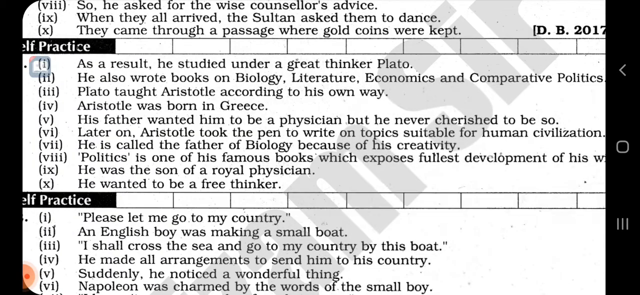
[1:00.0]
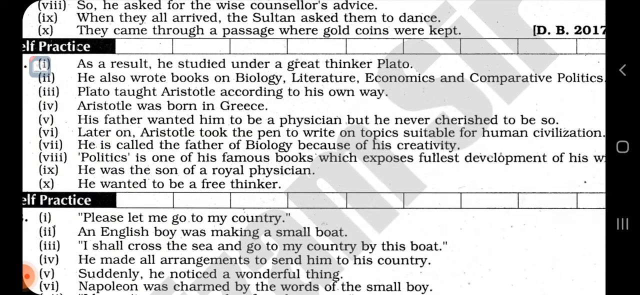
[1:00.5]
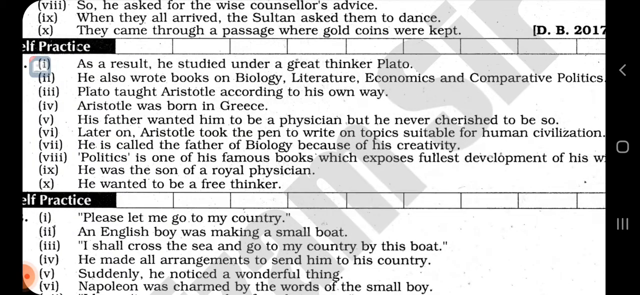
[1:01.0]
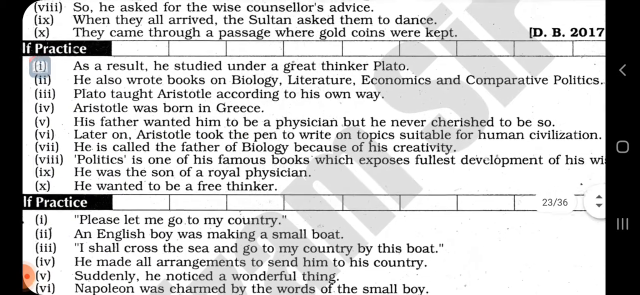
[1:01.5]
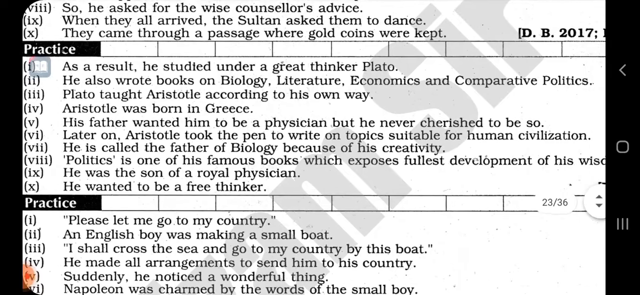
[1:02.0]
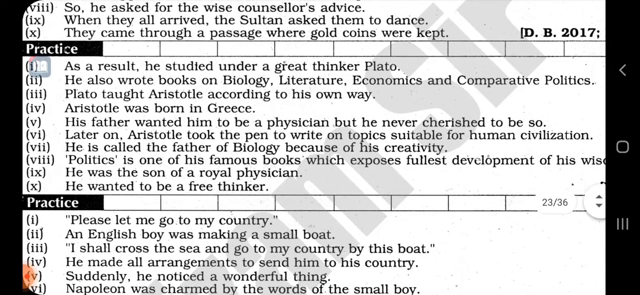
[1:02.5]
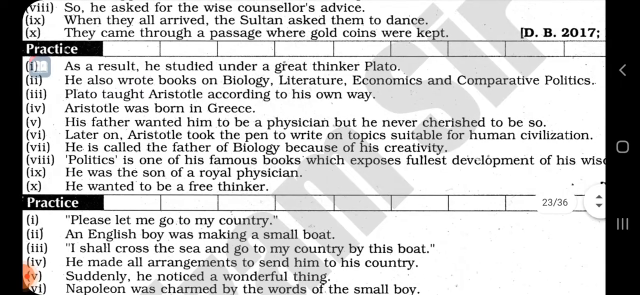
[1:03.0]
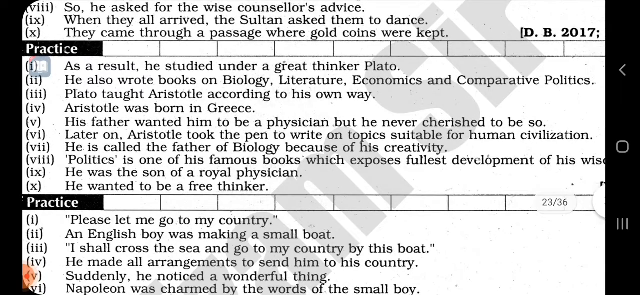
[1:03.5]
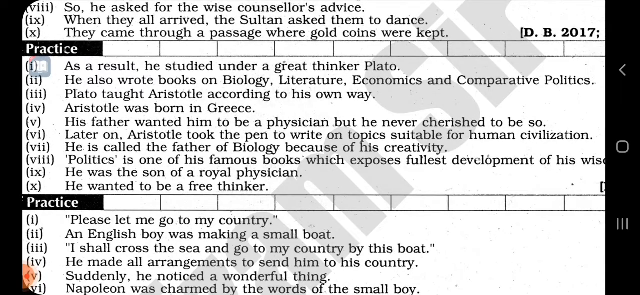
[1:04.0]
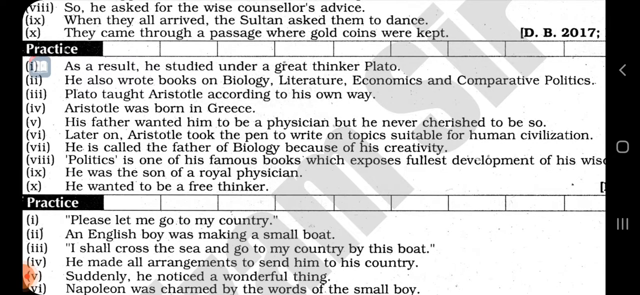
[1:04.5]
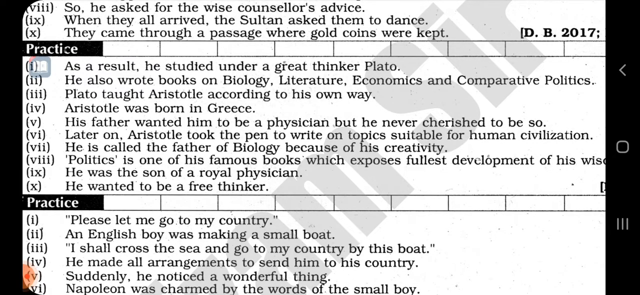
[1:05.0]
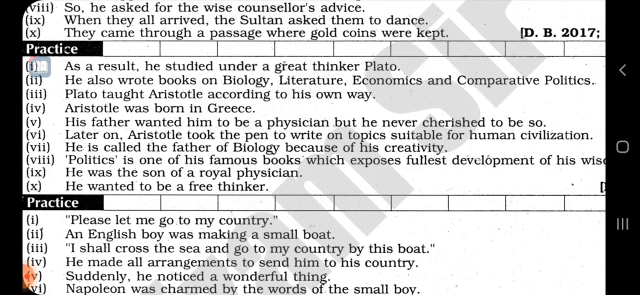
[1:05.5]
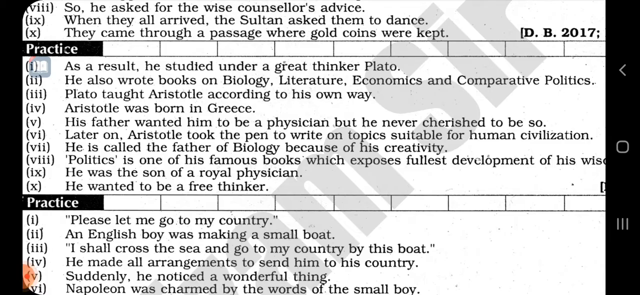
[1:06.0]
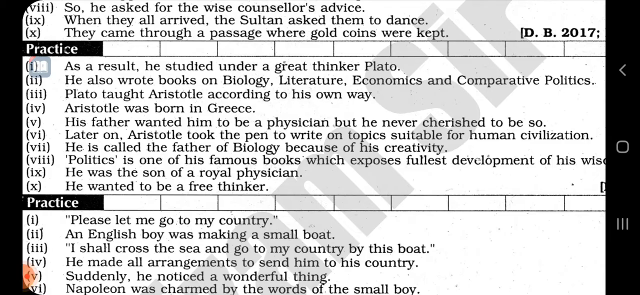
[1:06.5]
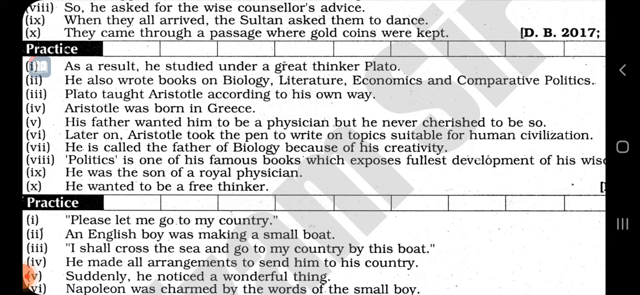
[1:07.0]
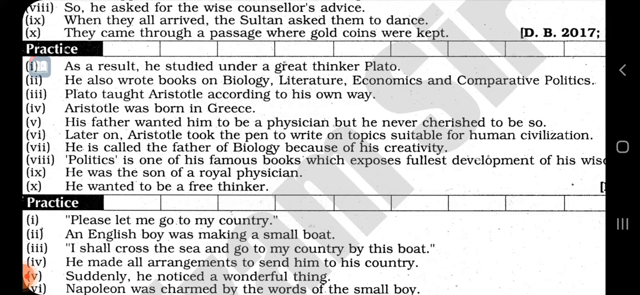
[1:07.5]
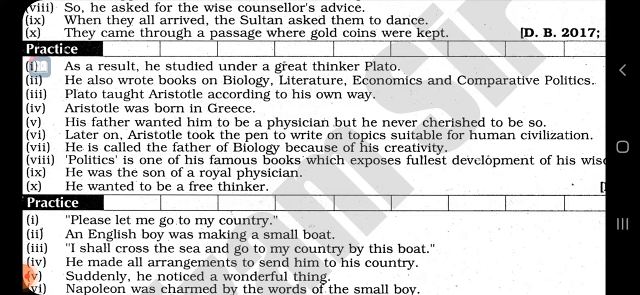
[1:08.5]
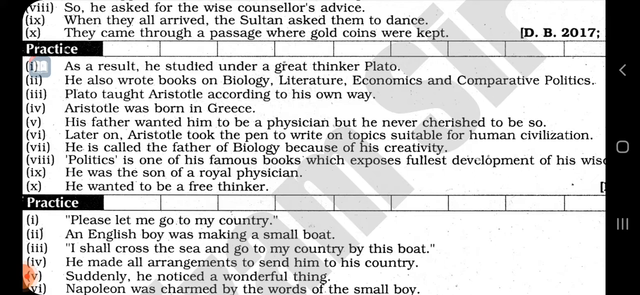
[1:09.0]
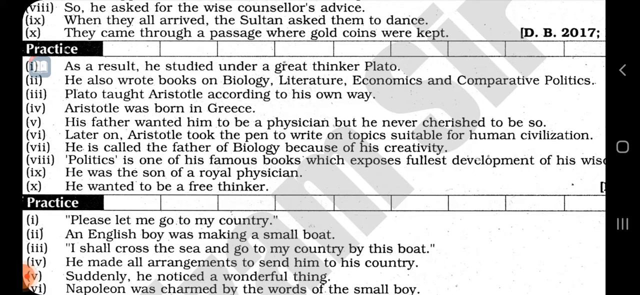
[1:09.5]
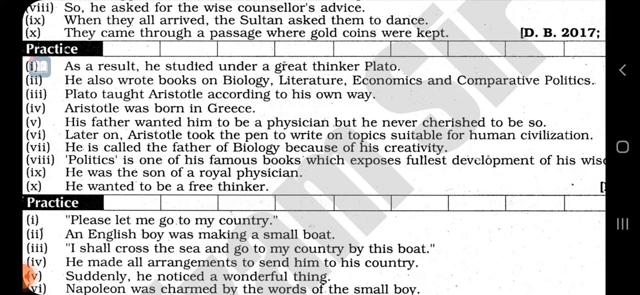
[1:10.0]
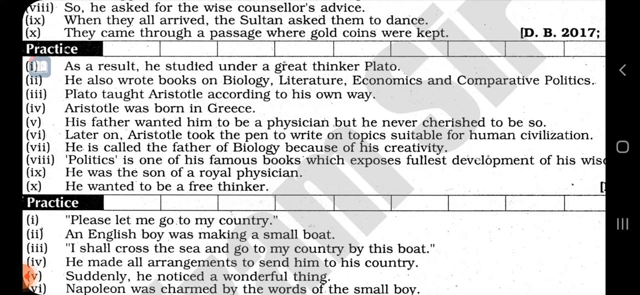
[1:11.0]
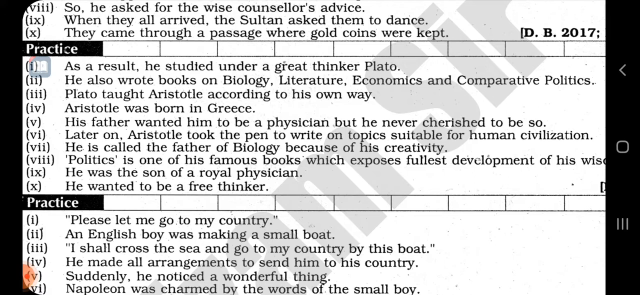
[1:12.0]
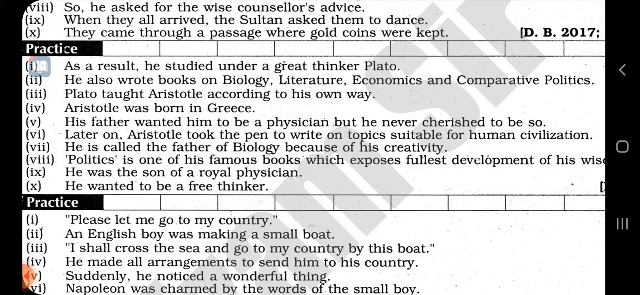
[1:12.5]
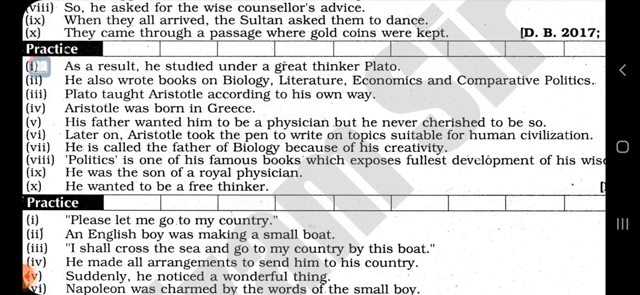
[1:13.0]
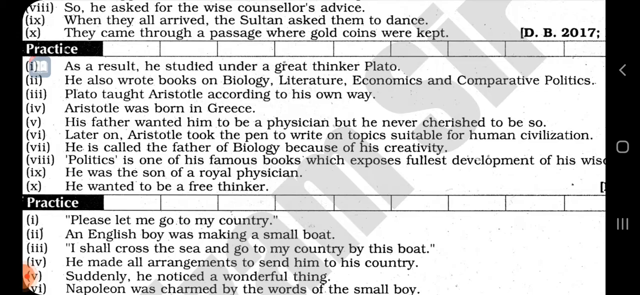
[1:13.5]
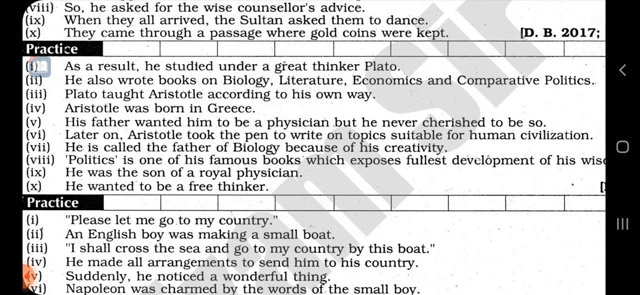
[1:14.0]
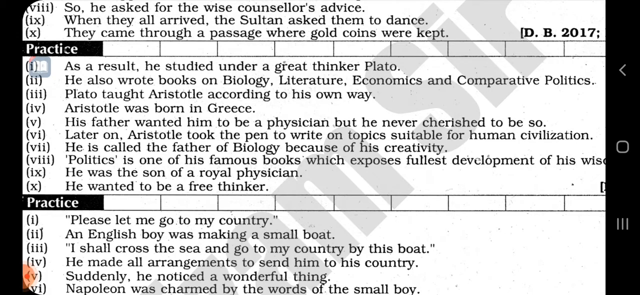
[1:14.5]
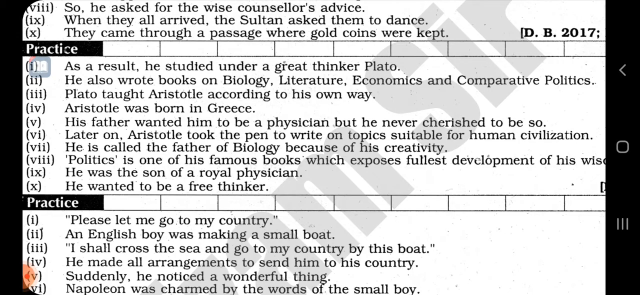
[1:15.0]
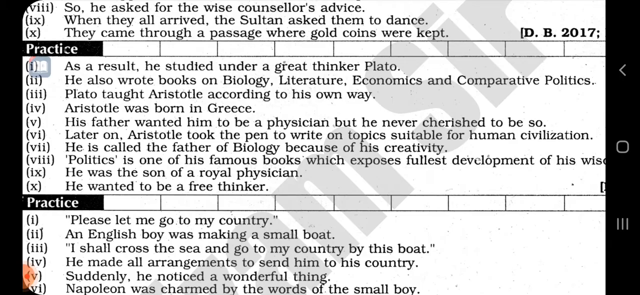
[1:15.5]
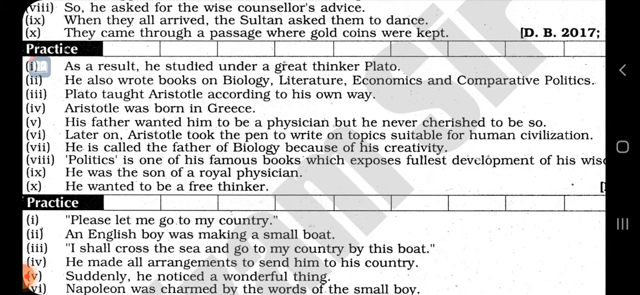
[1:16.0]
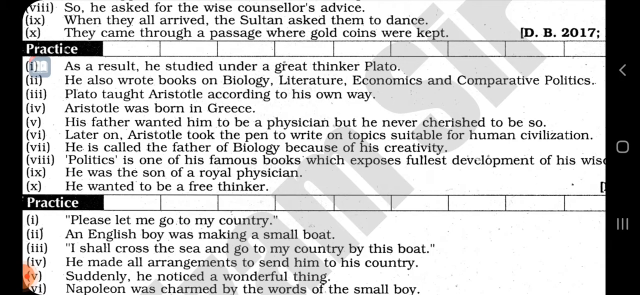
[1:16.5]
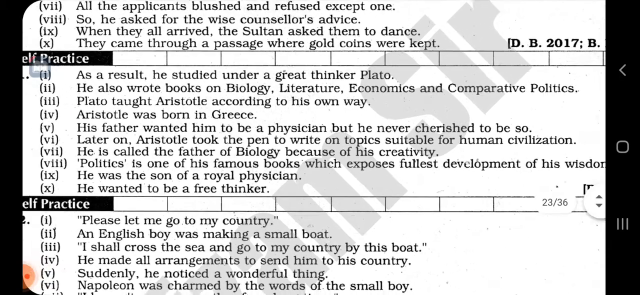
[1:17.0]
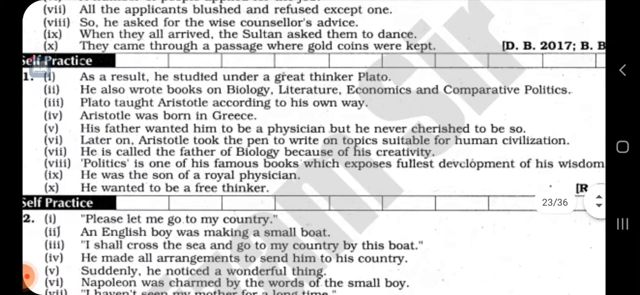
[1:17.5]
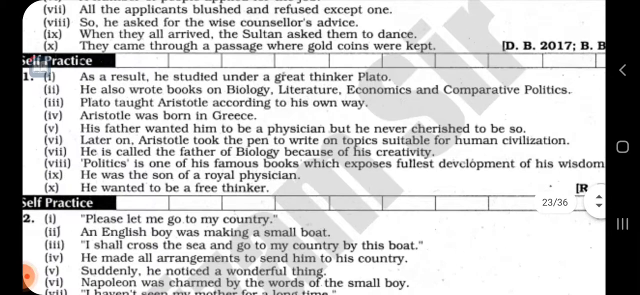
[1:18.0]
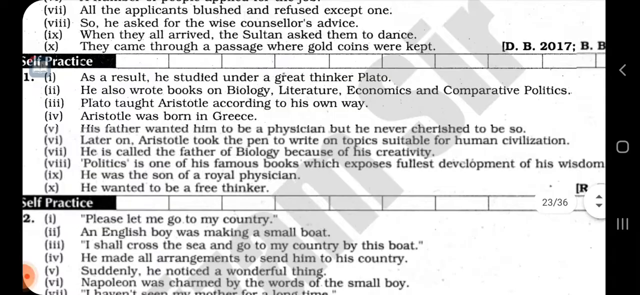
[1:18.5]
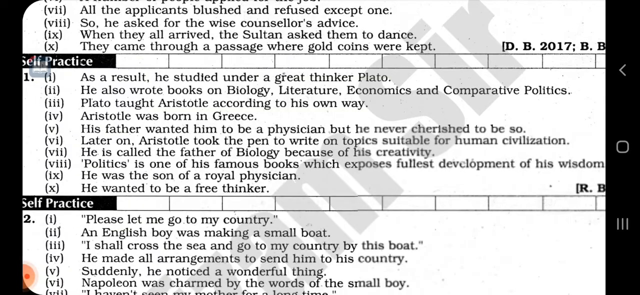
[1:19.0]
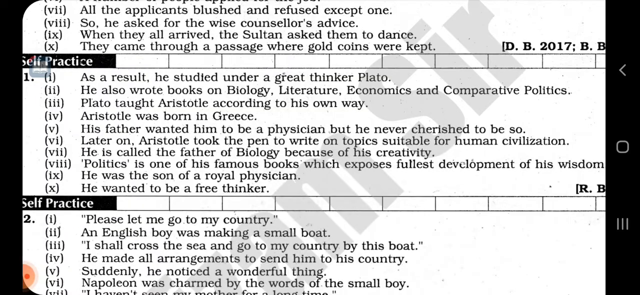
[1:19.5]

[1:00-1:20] The view is zoomed in slightly so the question numbers on the left are cut off, leaving only the Roman numerals one through ten for each question visible. On the left of the white page, the word "practice" appears in white text on a black box, with a tiny book symbol right below it in a grayed-out box. Next to that word are several blank boxes extending to the far right of the screen, where the reference is. Big gray letters run through the middle reading "a m s i" followed by a partly cut-off letter that could be an r or an m. The references for the questions are in bold and in brackets, citing initials and a year. The screen then zooms out a tiny bit, so only the last digit of each question number shows, "1" and "2" instead of 11 and 12. Option one of question 12 is in quotation marks.